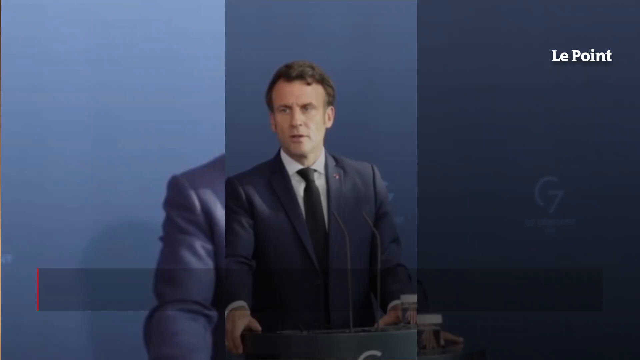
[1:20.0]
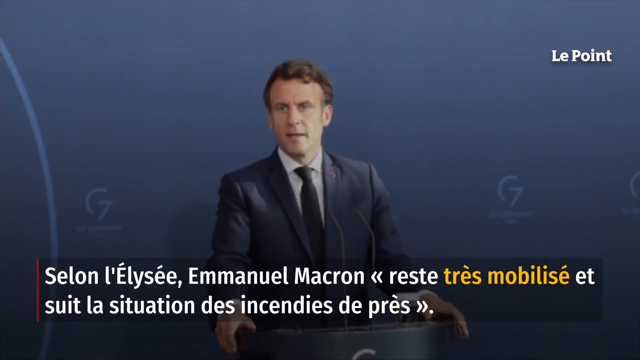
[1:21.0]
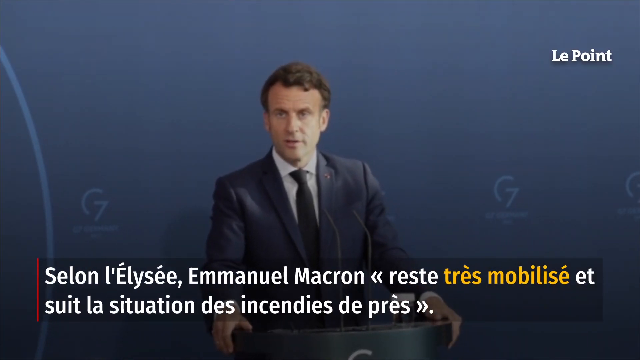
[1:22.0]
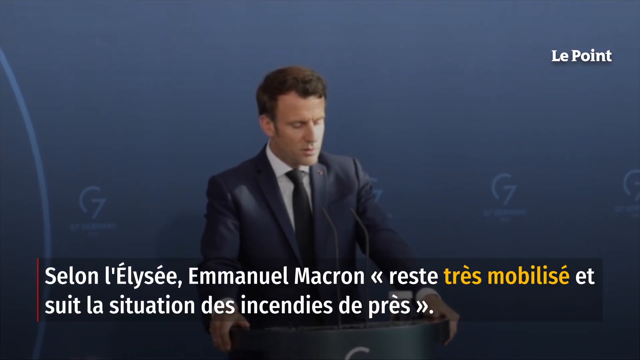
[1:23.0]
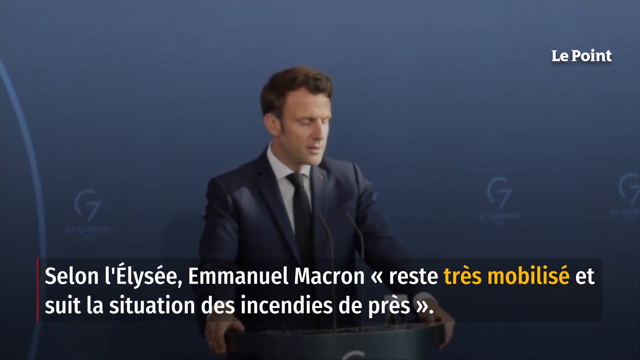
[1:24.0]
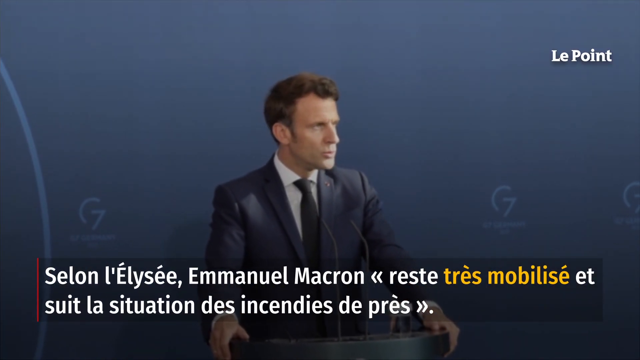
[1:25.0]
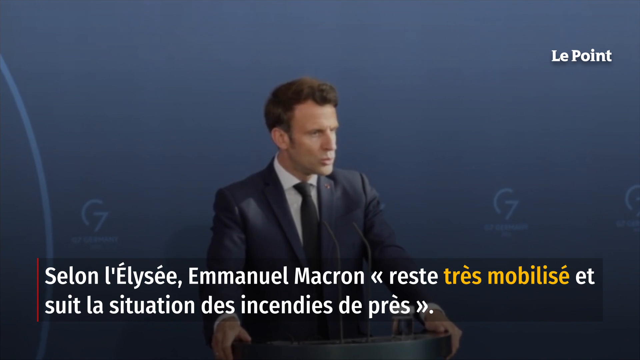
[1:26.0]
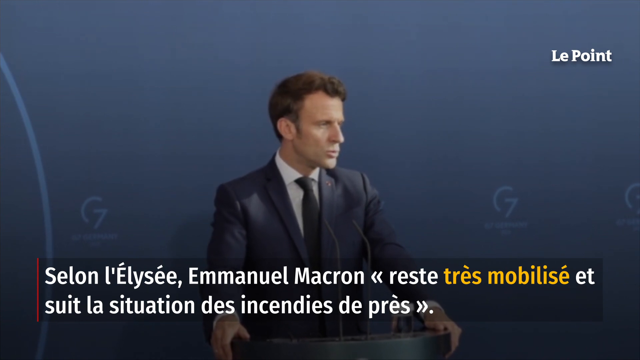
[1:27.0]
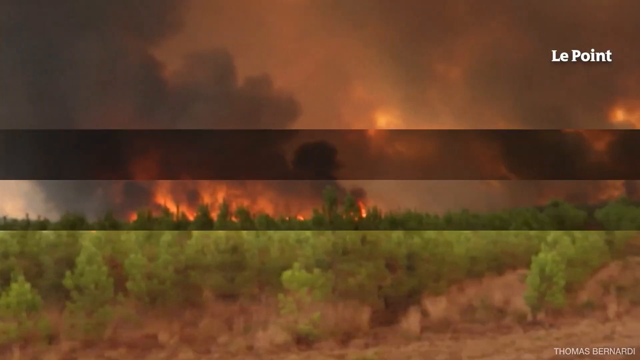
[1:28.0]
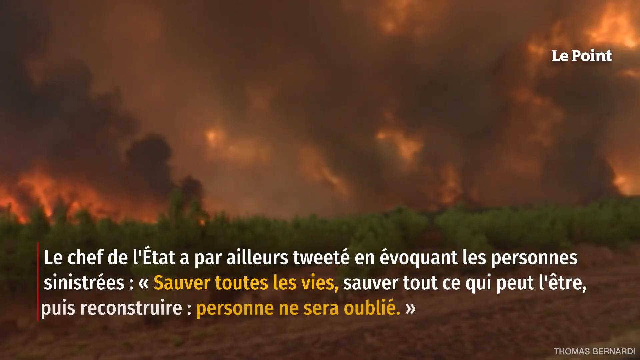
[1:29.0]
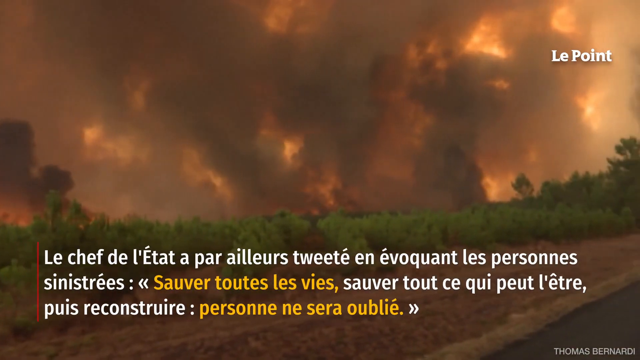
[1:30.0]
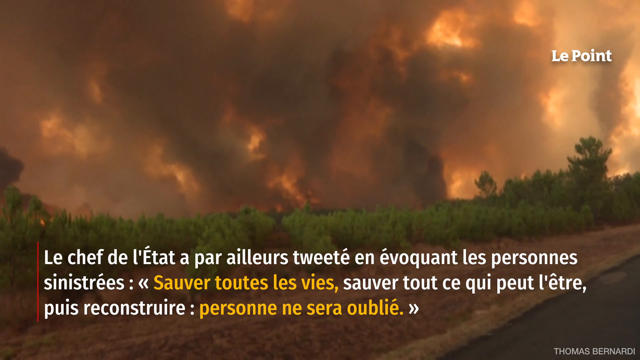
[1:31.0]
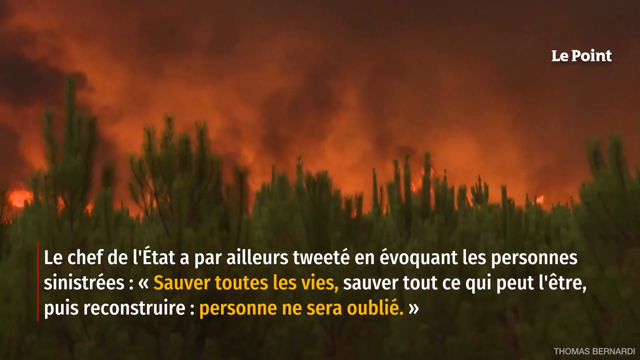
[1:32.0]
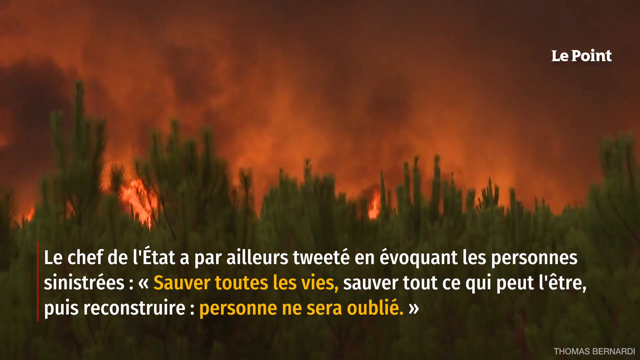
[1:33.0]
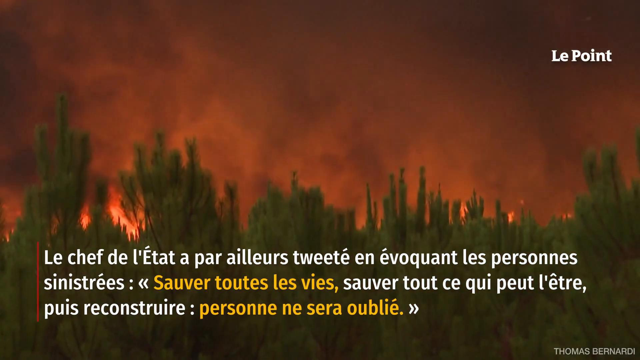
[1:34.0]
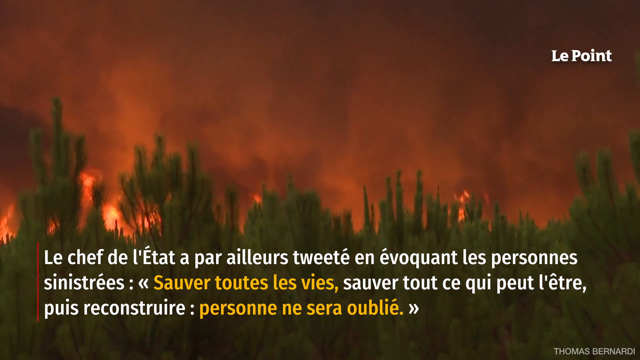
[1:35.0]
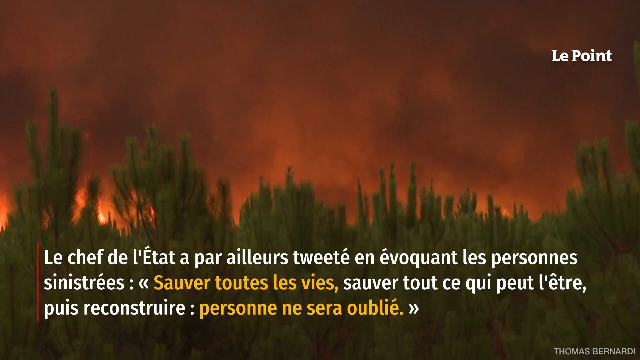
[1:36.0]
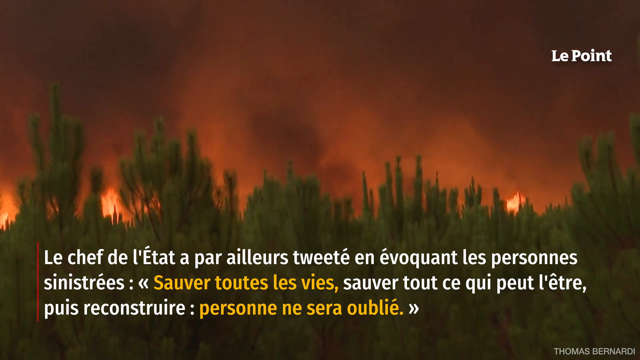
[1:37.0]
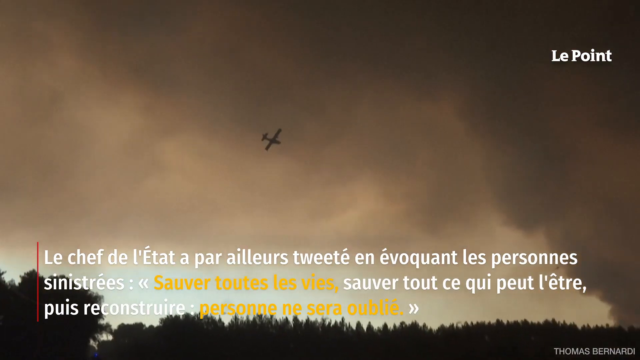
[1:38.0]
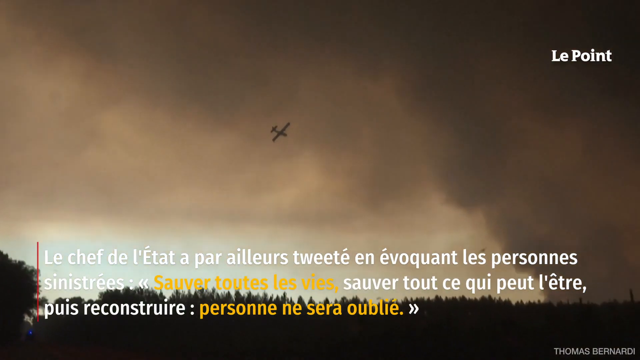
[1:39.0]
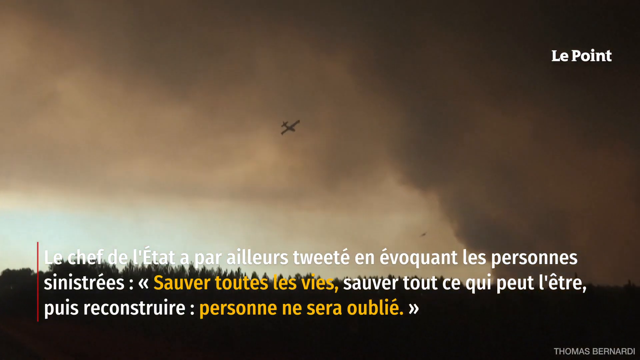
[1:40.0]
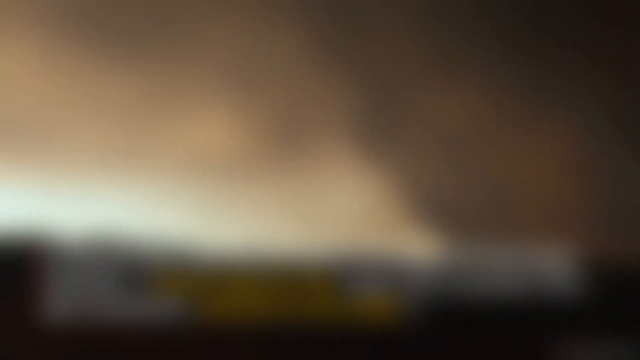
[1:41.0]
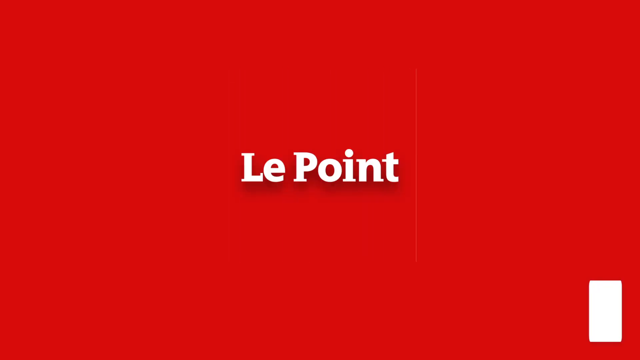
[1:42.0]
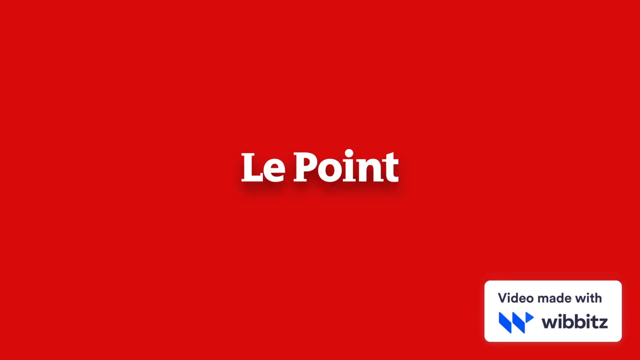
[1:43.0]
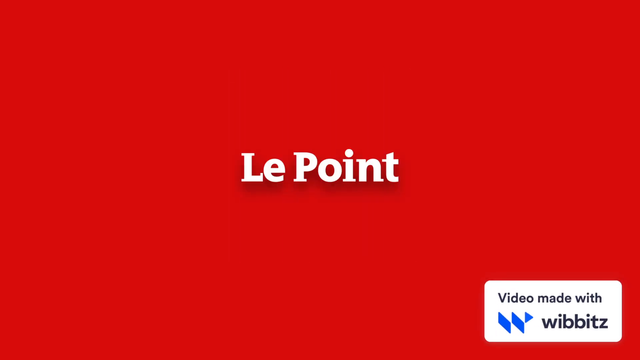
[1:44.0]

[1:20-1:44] The Le Point news coverage continues with the man assumed to be Emmanuel Macron providing what looks to be a public address. He is standing in front of a dark blue background with a logo of a half circle and the number 7. He is a well-groomed white man with sandy blonde and gray hair, wearing a nice suit. The video then cuts to footage of the wildfire in action, showing a lot of fire and smoke in a very dramatic fashion, apparently signaling an emergency. The fire appears to cover a large amount of forest area and is actively burning with large flames. Briefly, a helicopter can be seen flying in the sky toward the fire area. The coverage then ends on a solid red screen that reads "Le Point" in basic white print.